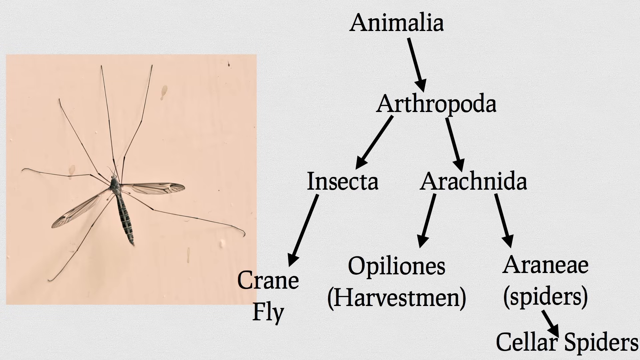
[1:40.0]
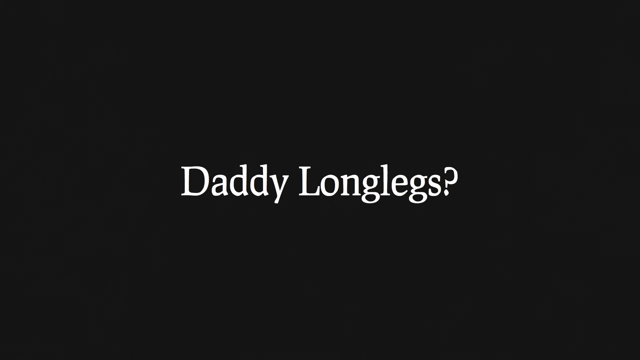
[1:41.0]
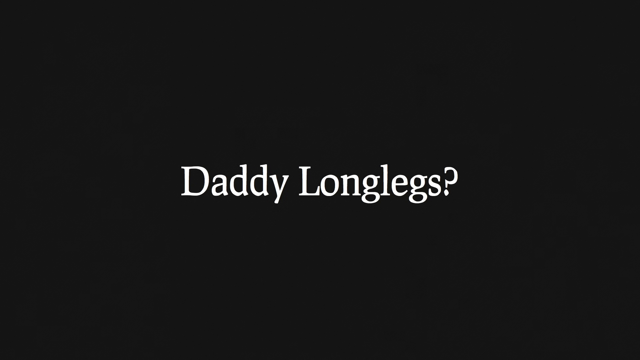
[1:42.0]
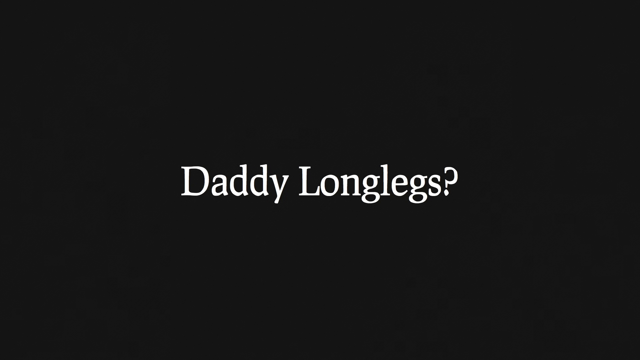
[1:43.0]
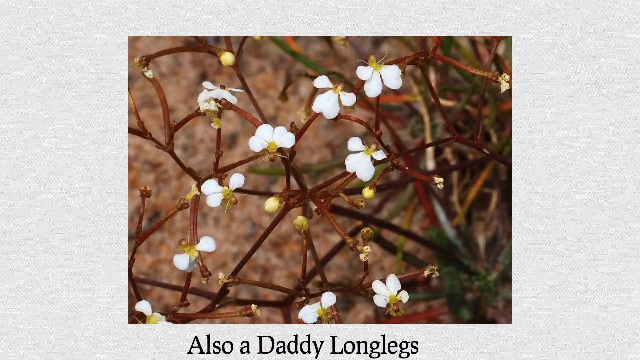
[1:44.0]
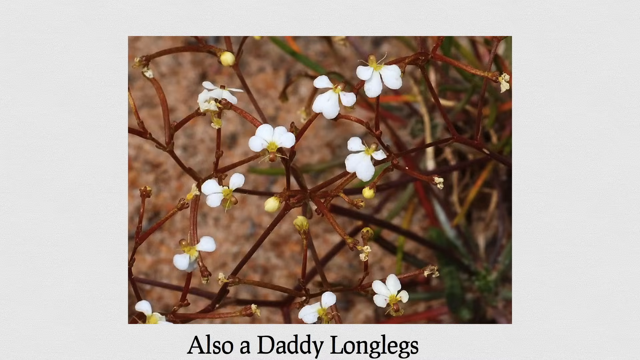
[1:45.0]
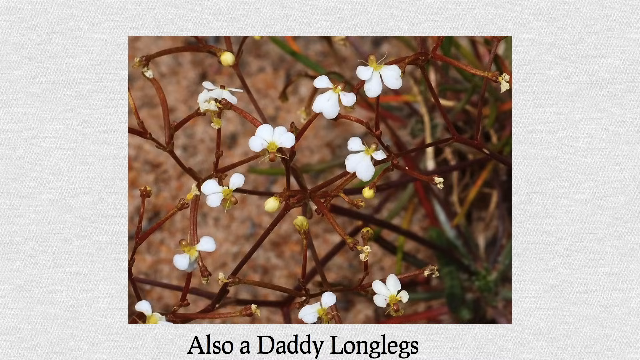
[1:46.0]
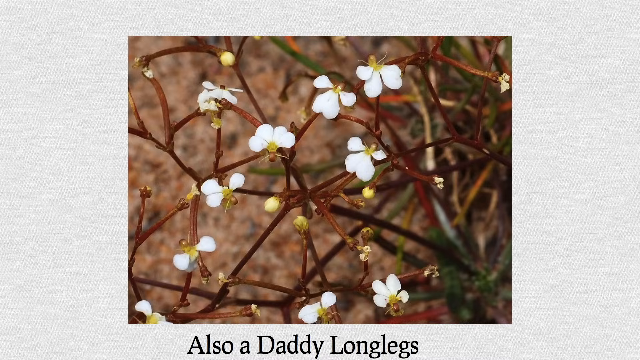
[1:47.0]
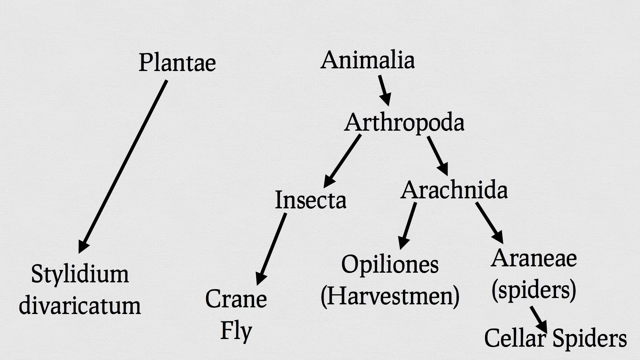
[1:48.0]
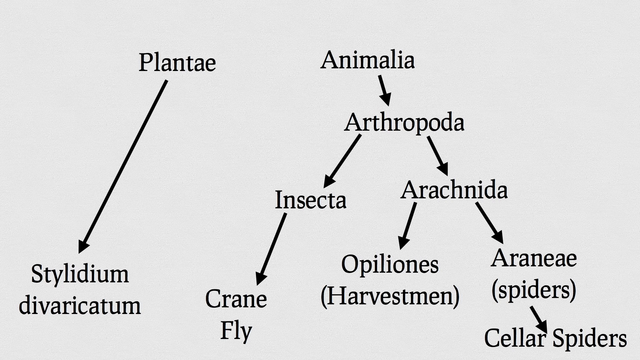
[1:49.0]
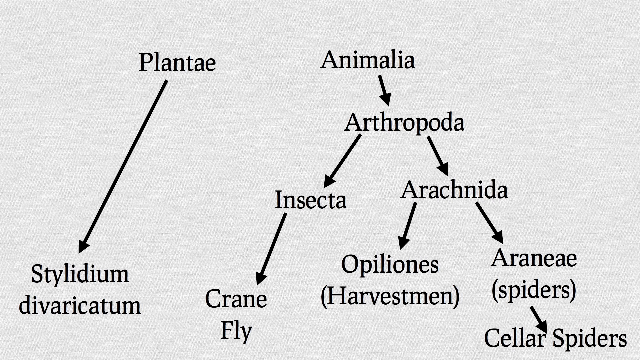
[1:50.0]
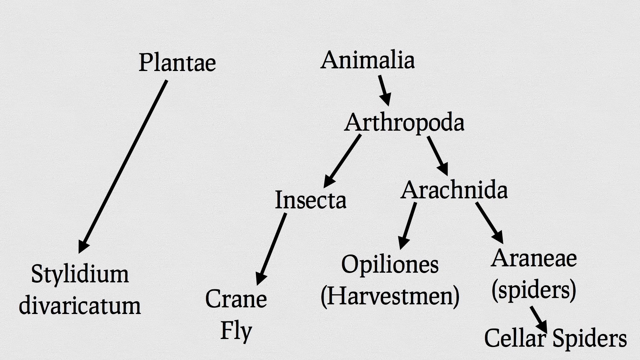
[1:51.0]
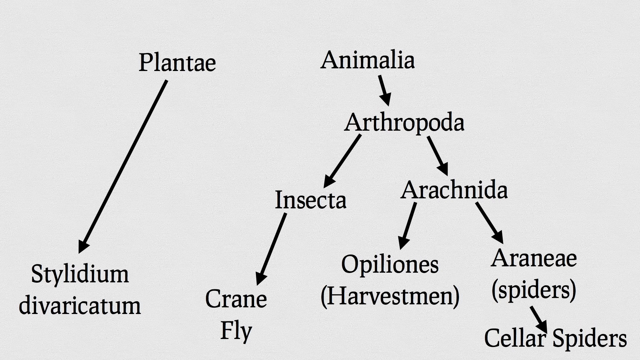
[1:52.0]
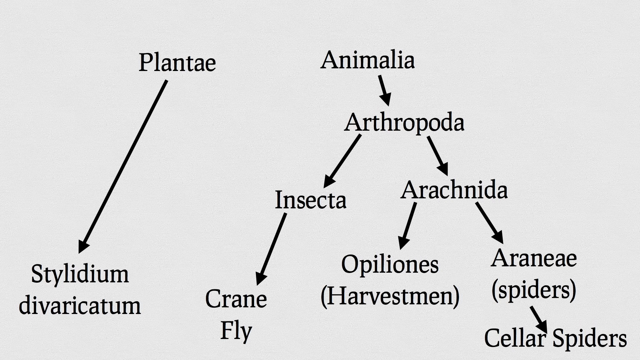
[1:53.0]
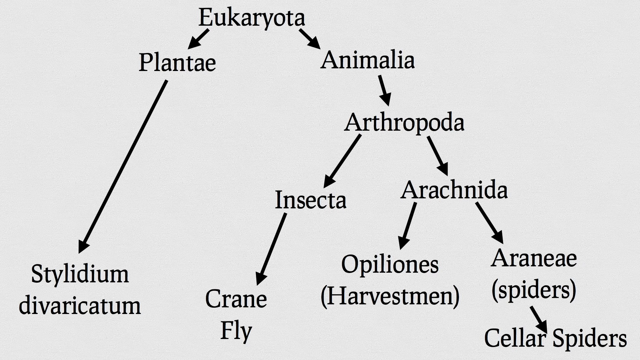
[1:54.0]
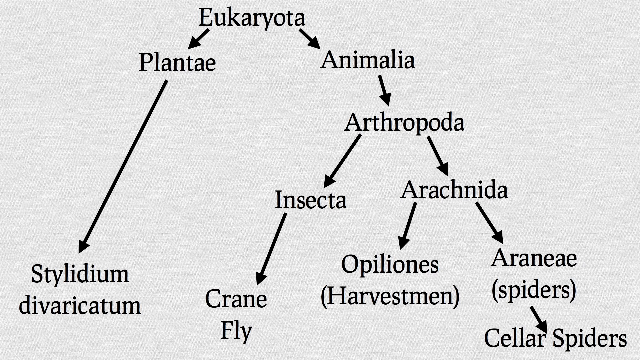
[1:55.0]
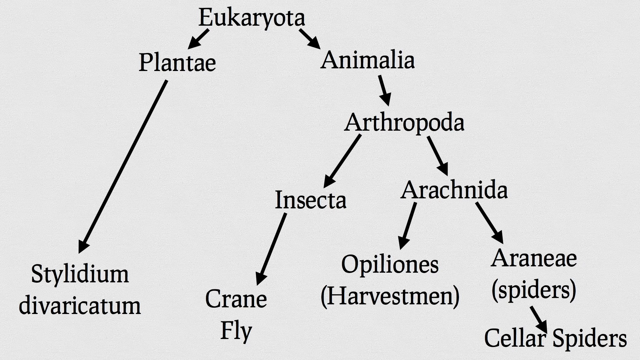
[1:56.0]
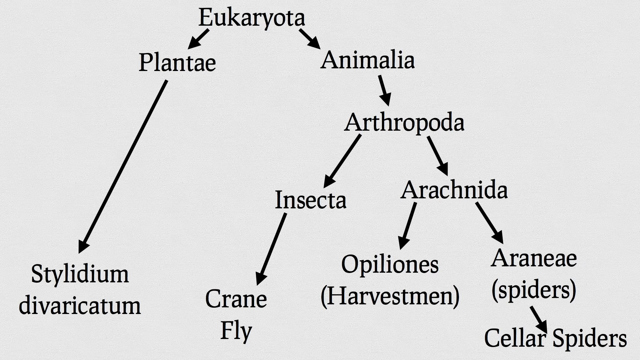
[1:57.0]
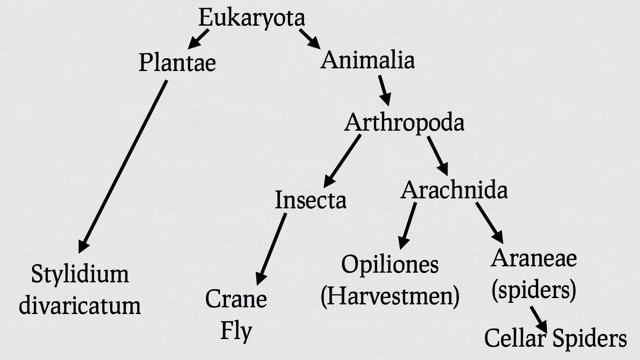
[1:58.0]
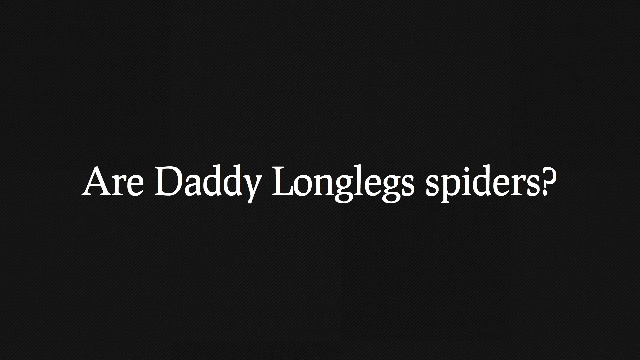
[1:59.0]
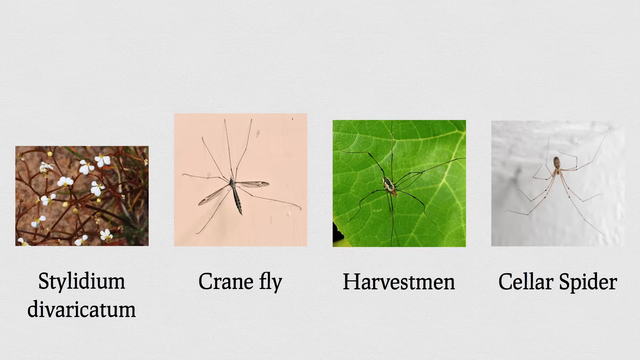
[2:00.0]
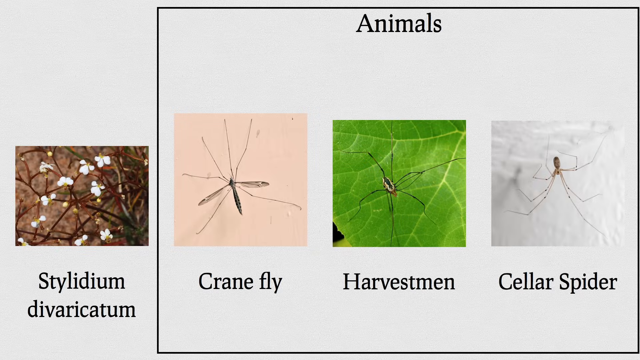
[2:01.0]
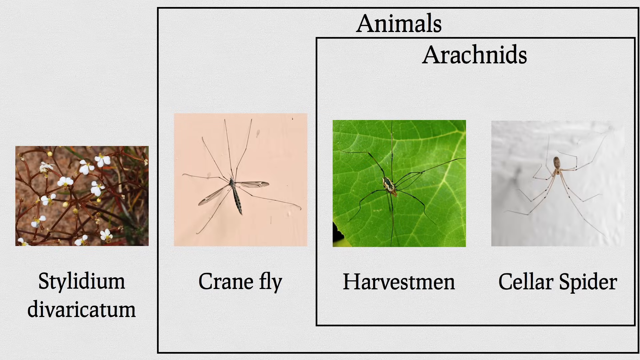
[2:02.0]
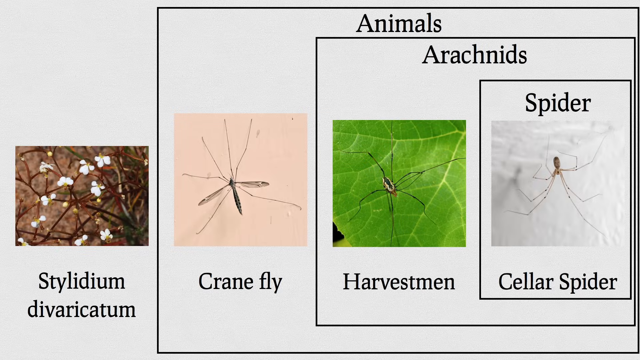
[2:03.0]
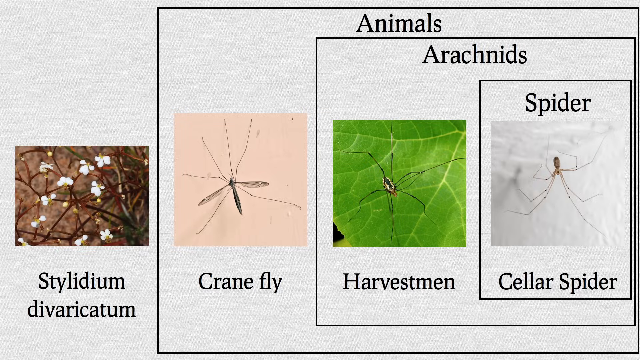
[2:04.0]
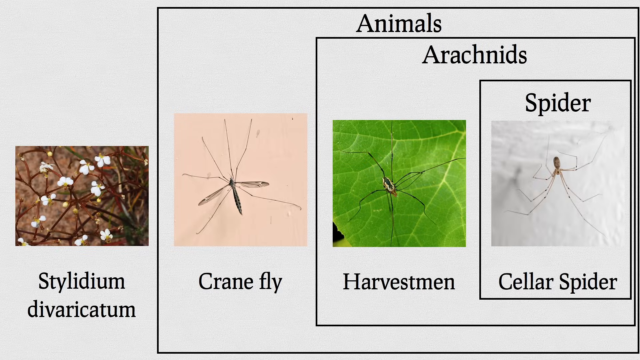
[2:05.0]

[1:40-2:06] The title page has the crane fly with all its legs on the left and the Animalia tree branch diagram spreading to the crane fly, Opiliones and cellar spiders. A title page with white writing then says "daddy long legs?" Next is a plant with white flowers, green buds and brown stems, all of which seem interconnected. The video returns to the Animalia tree branch diagram, where a separate branch shows the classification "Plantae" and a branch that says "Stylidium divercatum". The two separate branches, Plantae and Animalia, are then shown under Eukaryota. Another, unclear diagram follows, consisting of separate layers that are green, red and yellow, and then the video returns to the Eukarya tree diagram. A title page then asks "Are daddy long legs spiders?" Next is a page showing images of the Stylidium divercatum plant, the crane fly, the harvestman on the green leaf, and the brown cellar spider with spots on the white background. Everything from the crane fly onward is classified in boxes as animals, and everything from the harvestman onward as arachnids. The video then fades out to a black screen.